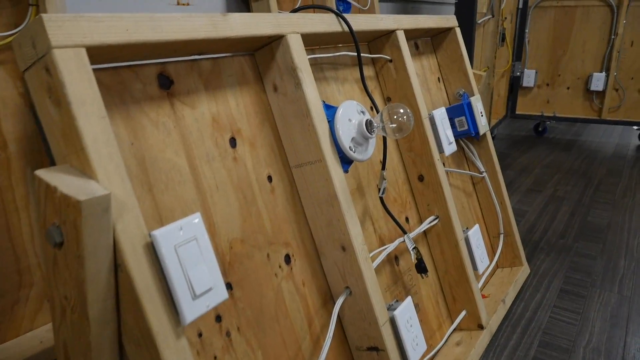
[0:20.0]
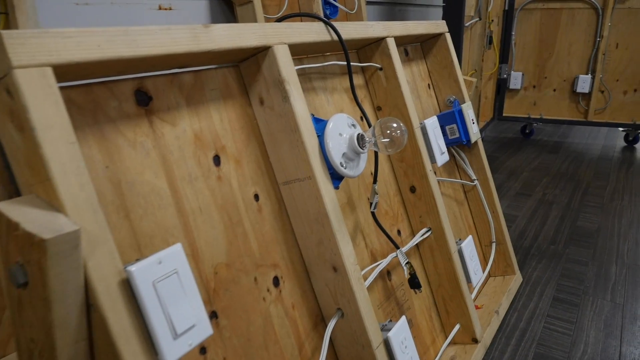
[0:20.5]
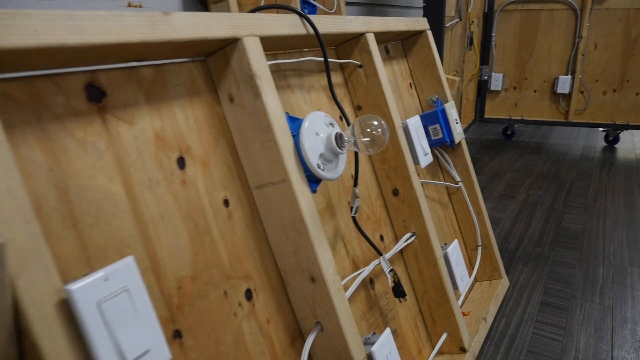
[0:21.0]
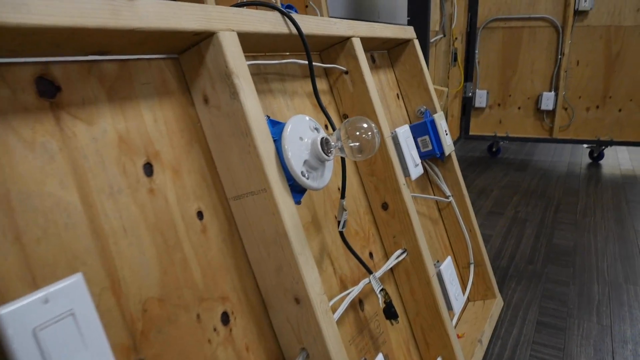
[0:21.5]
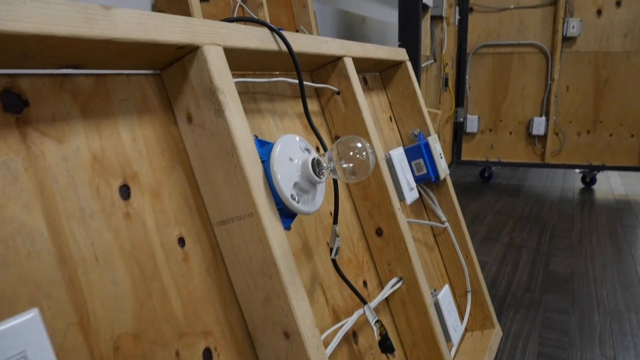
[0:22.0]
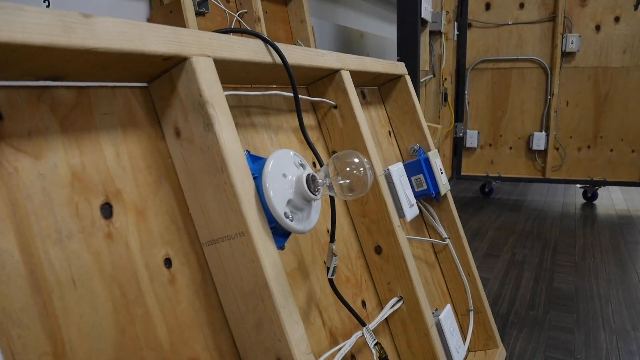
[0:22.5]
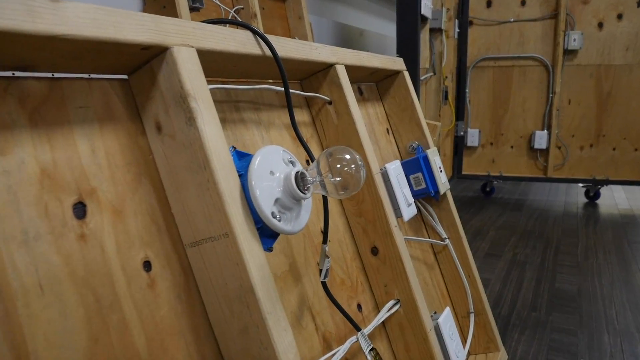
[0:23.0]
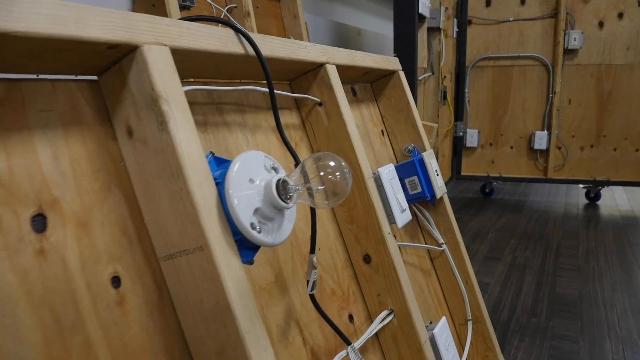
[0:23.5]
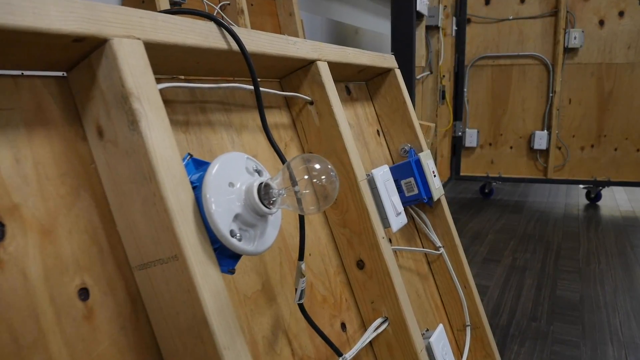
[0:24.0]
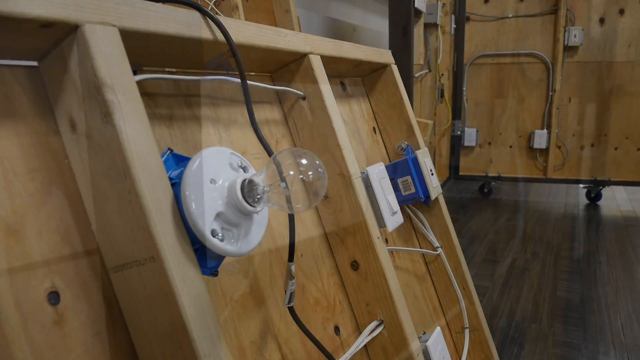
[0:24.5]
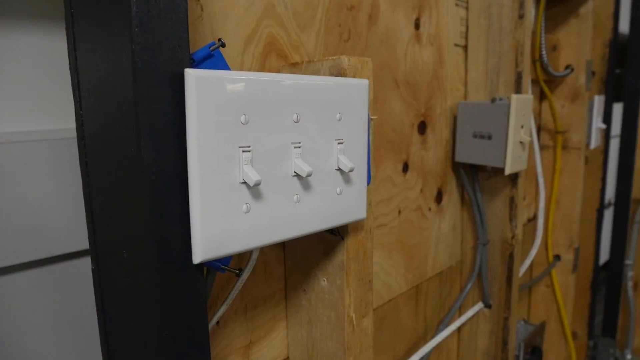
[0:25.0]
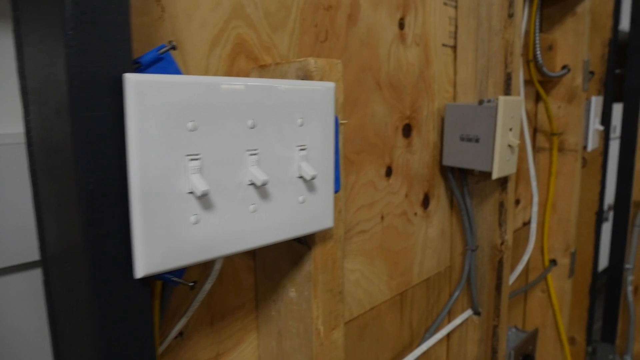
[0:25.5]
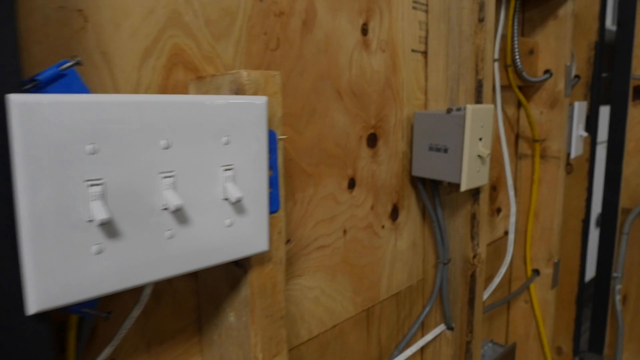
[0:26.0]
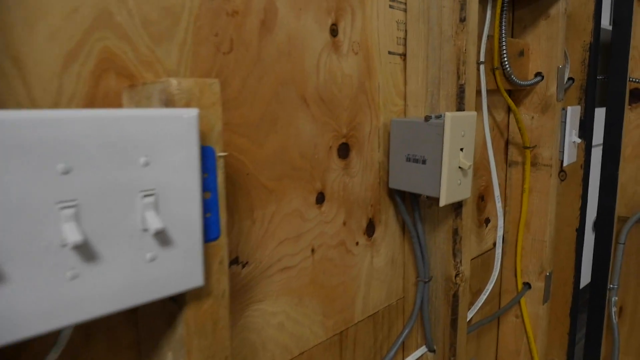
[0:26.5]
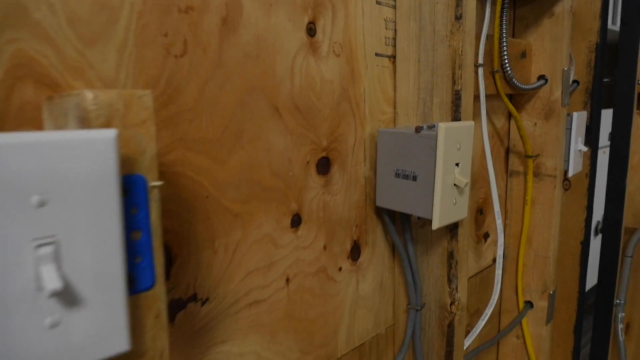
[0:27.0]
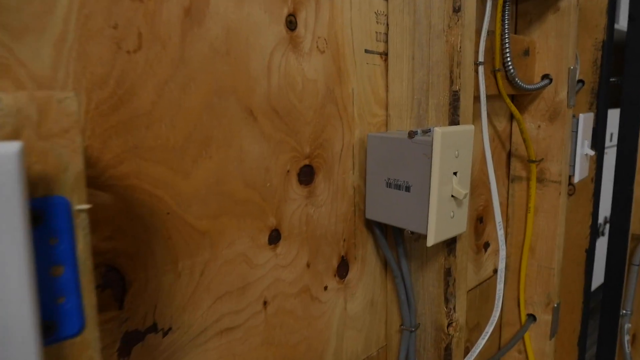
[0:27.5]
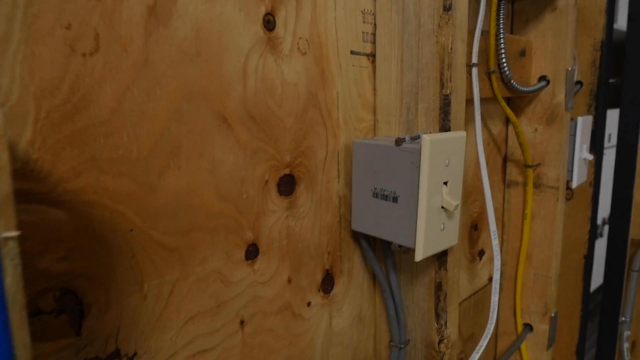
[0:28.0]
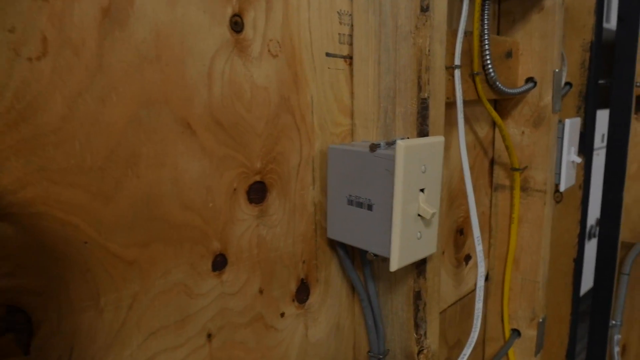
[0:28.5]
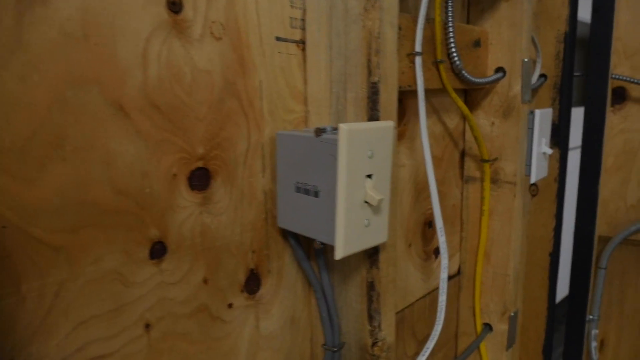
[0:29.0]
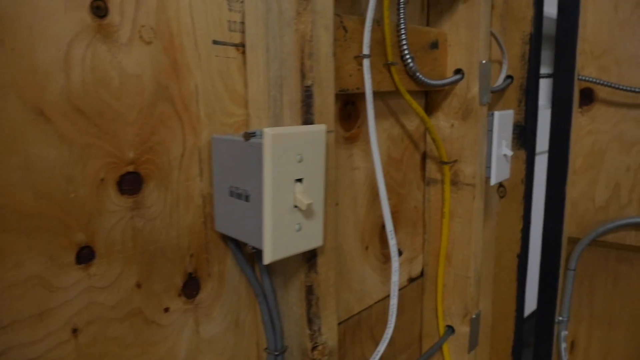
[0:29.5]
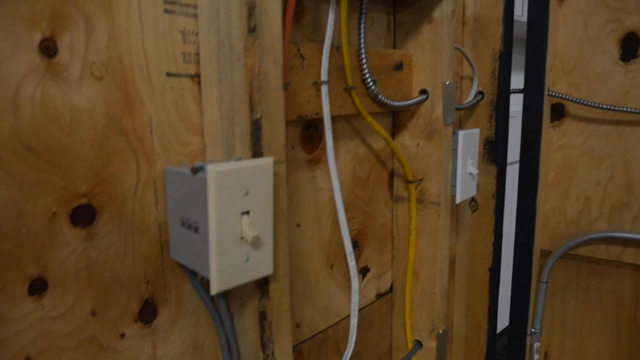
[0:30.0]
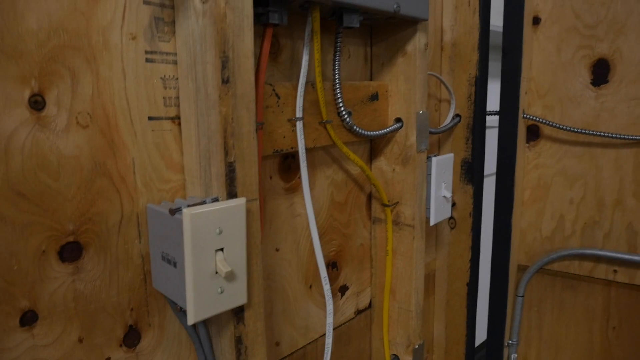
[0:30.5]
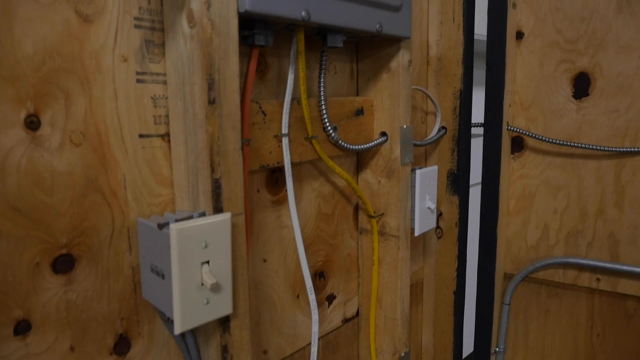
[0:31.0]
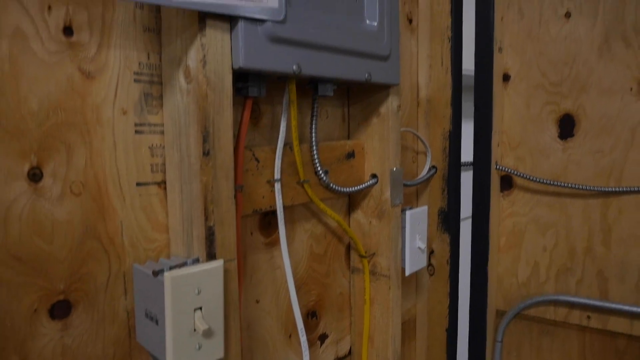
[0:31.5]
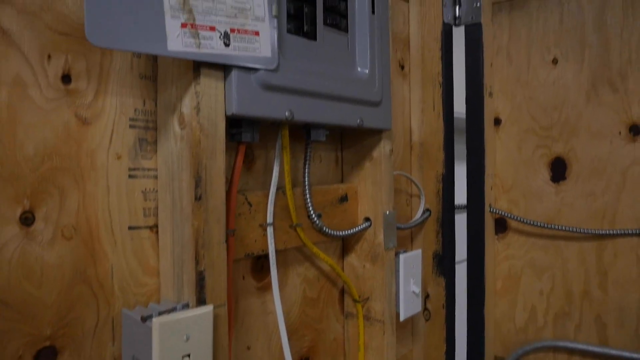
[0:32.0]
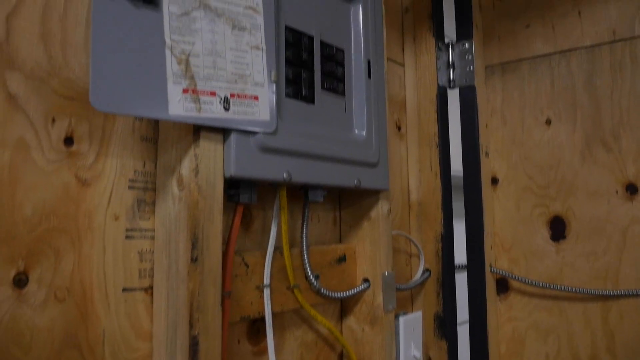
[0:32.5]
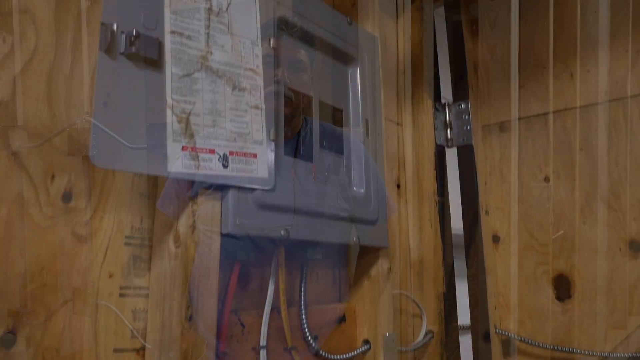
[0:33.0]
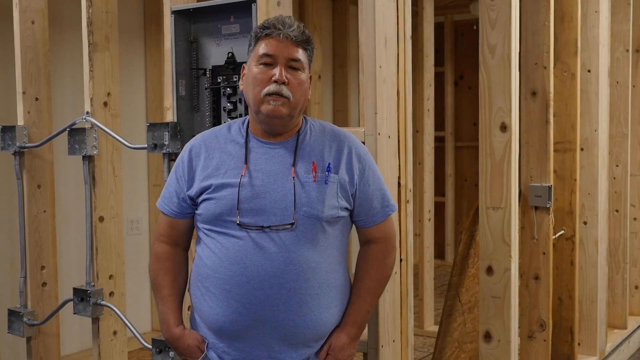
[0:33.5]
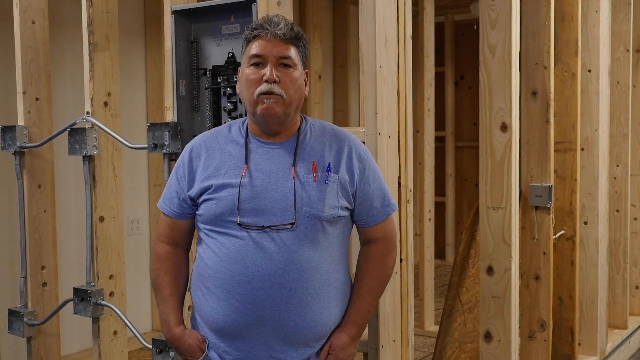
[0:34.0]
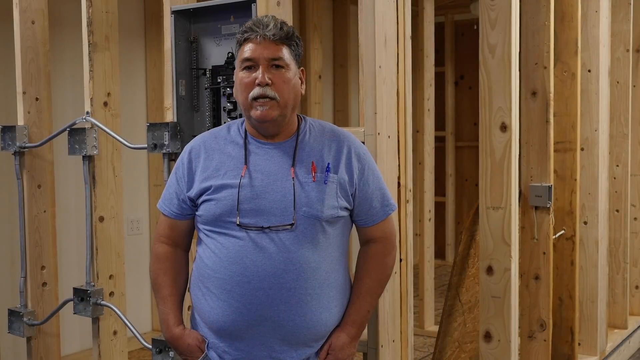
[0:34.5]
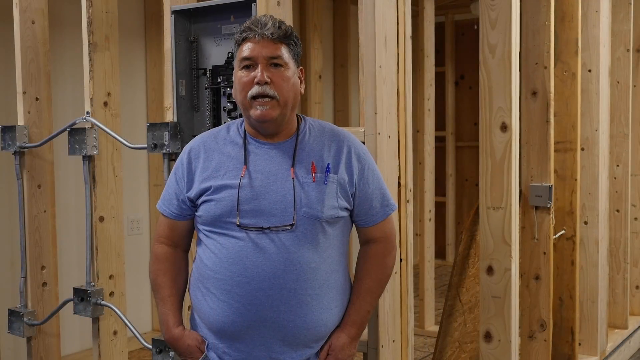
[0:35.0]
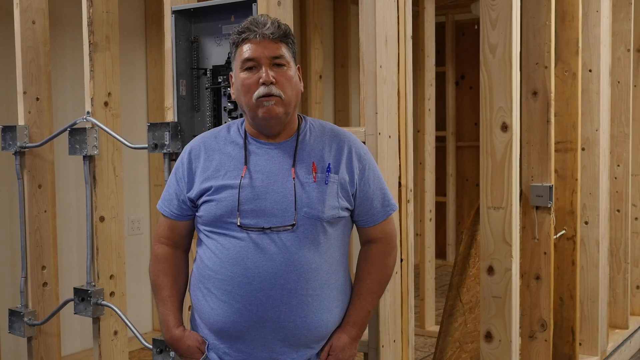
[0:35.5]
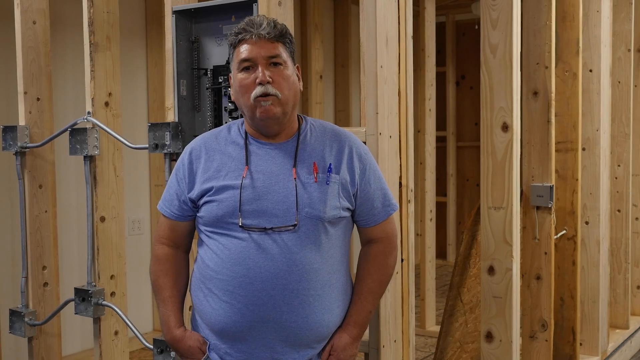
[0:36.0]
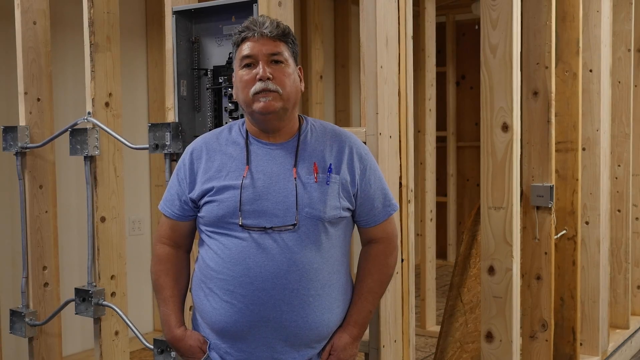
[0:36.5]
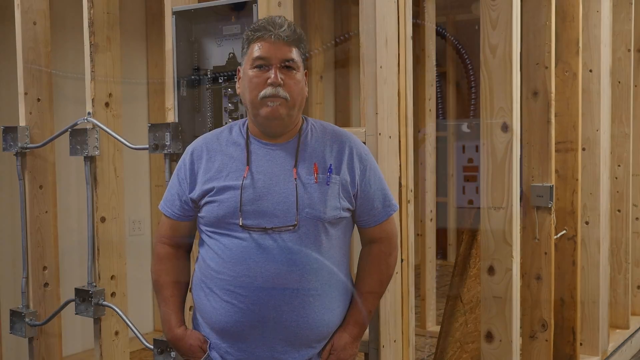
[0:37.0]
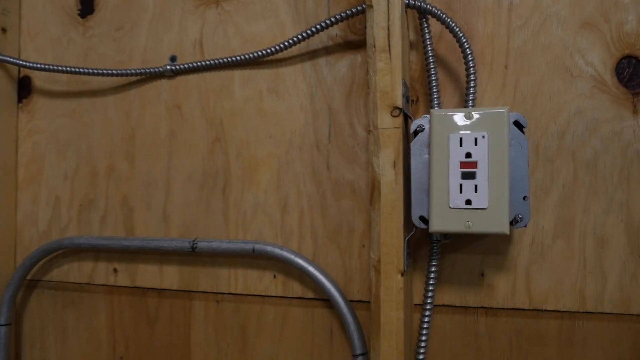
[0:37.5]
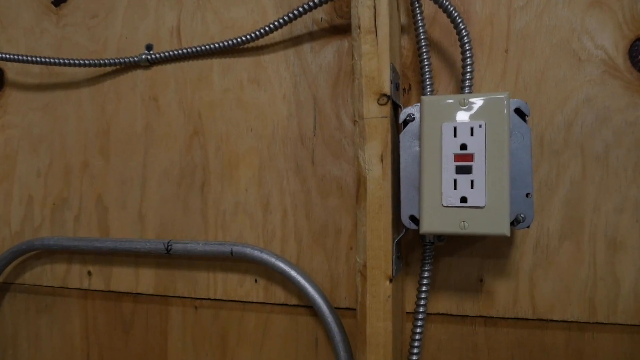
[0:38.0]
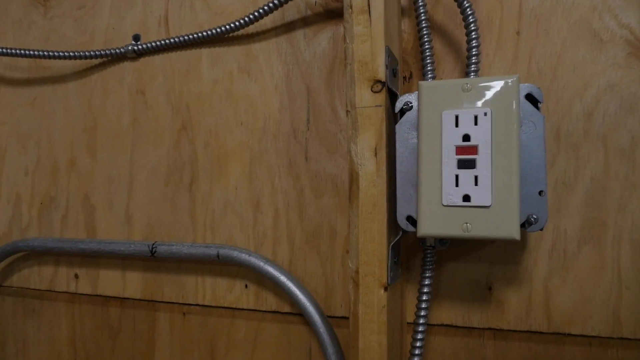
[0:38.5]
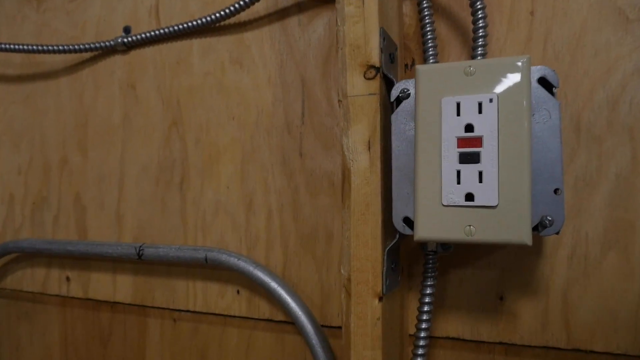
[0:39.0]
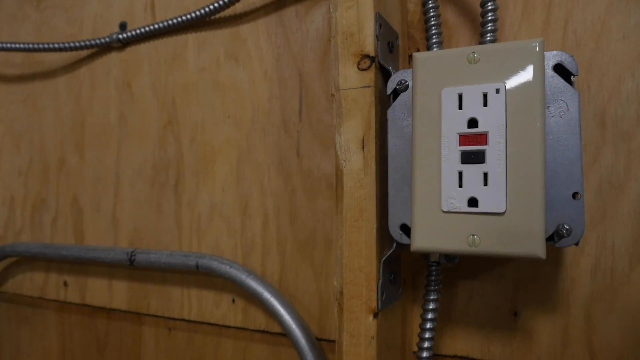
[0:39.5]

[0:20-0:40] The video focuses on the wiring on a wooden board, with electrical wires running through it and a number of switches. A bulb is pinned on the board, sitting on a bulb holder. There are also two switches on the wooden board and a cable running through it. The camera pans across the board, showing how the wiring has been done, including a double gang switch and a single switch. Behind it, a main switch is on the board, along with a small brown meter box. As the video pans through the room, the setup is all about wiring.